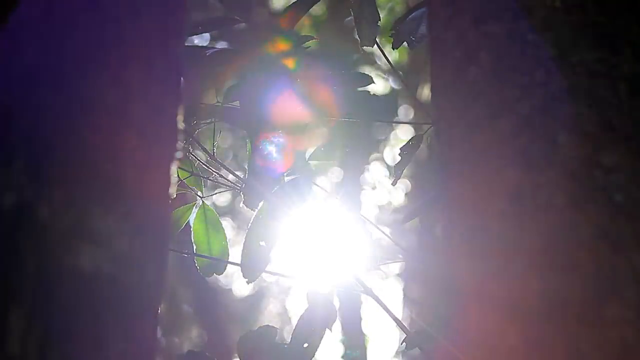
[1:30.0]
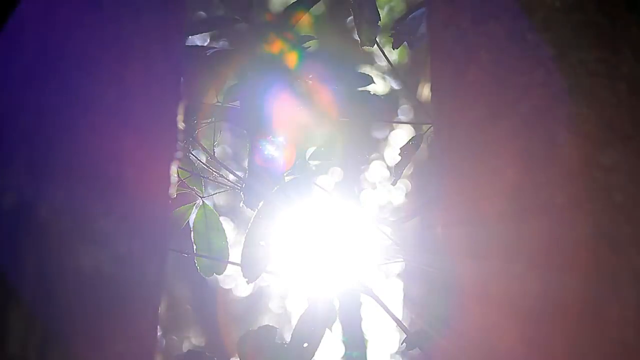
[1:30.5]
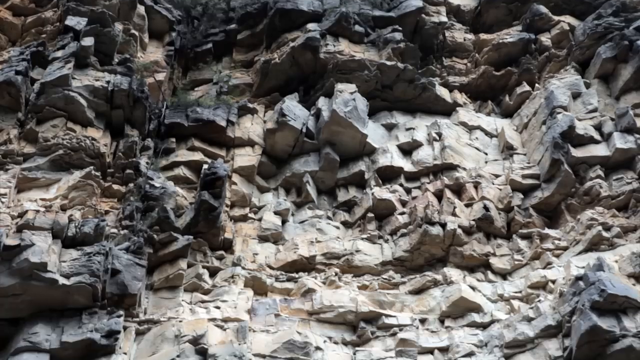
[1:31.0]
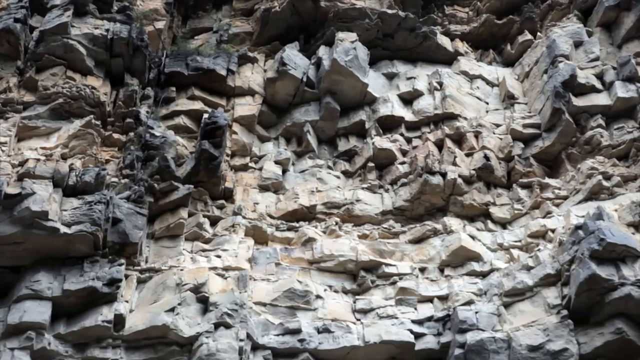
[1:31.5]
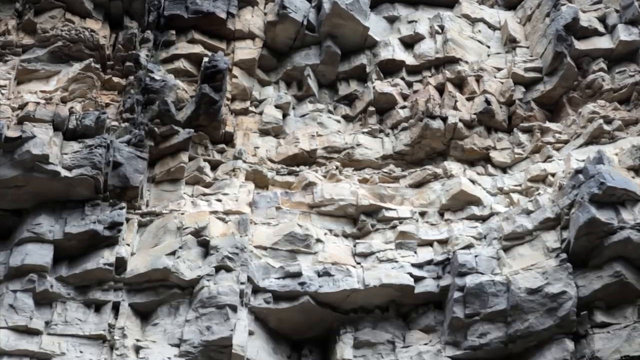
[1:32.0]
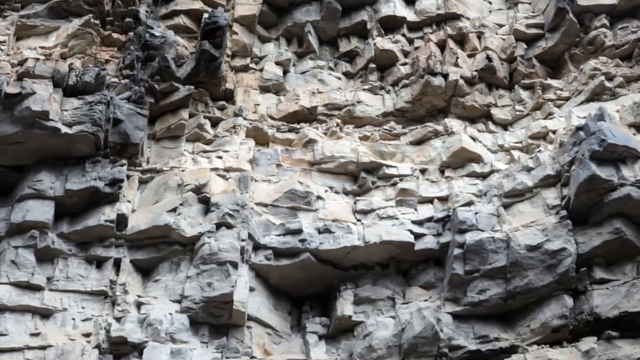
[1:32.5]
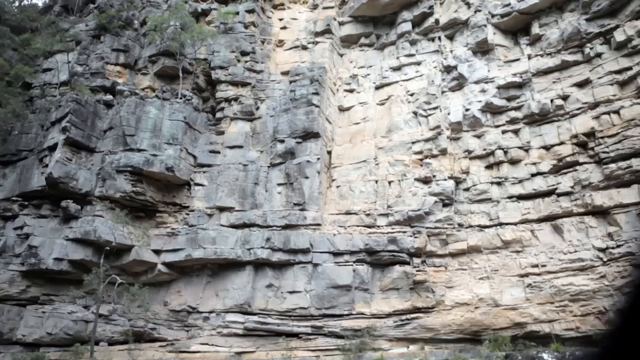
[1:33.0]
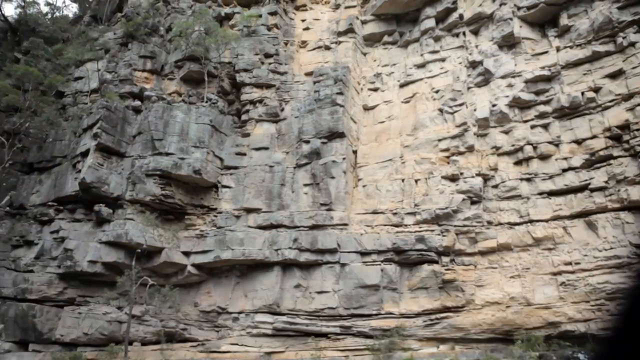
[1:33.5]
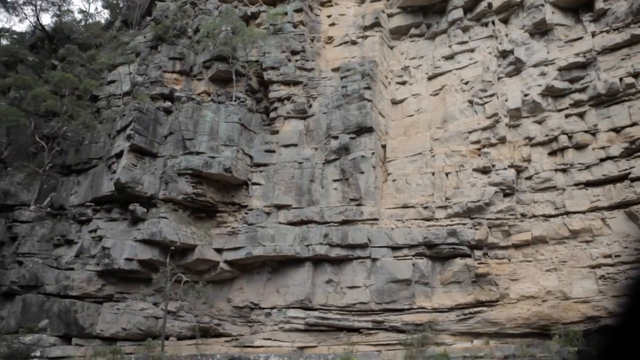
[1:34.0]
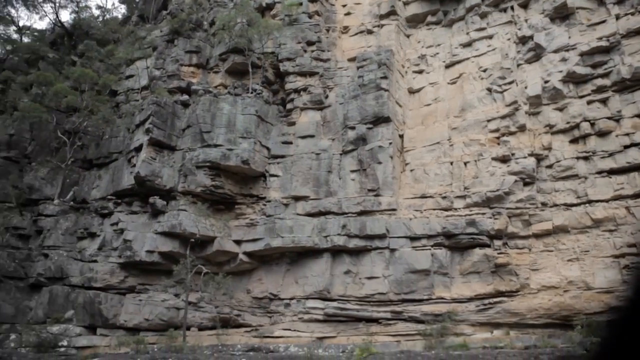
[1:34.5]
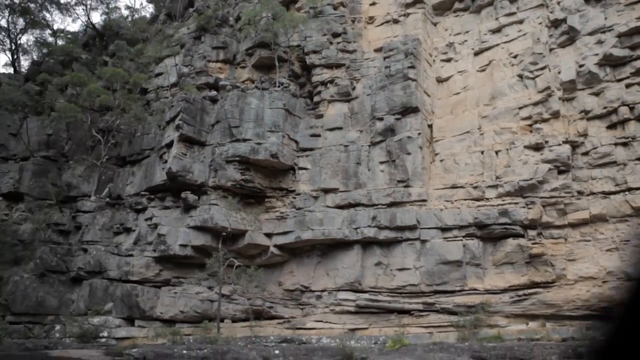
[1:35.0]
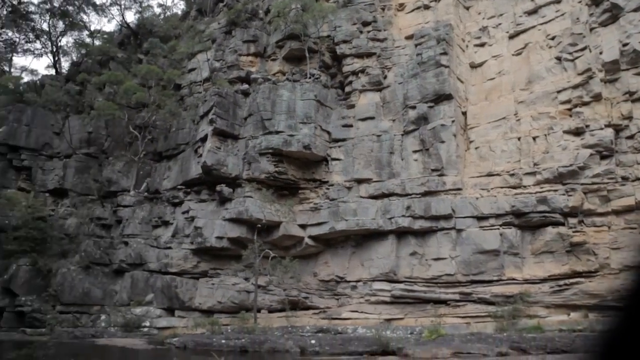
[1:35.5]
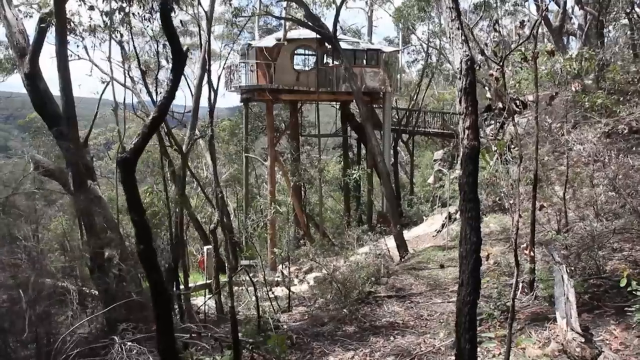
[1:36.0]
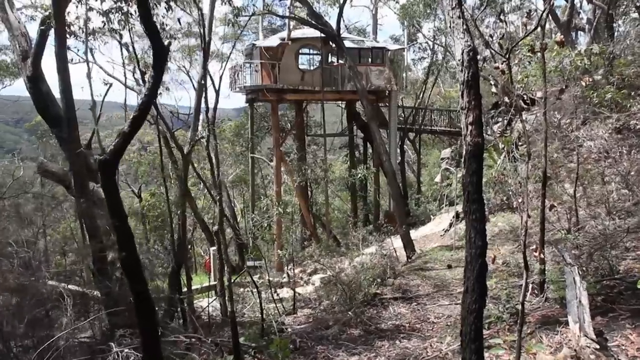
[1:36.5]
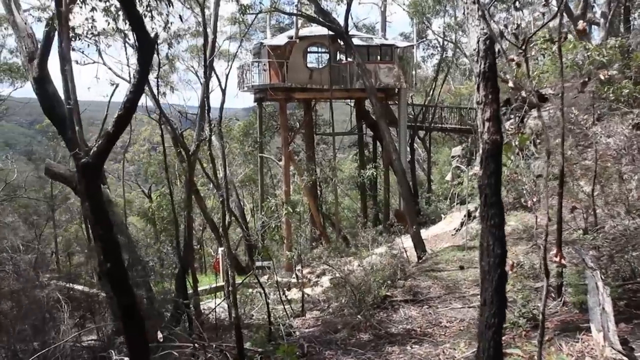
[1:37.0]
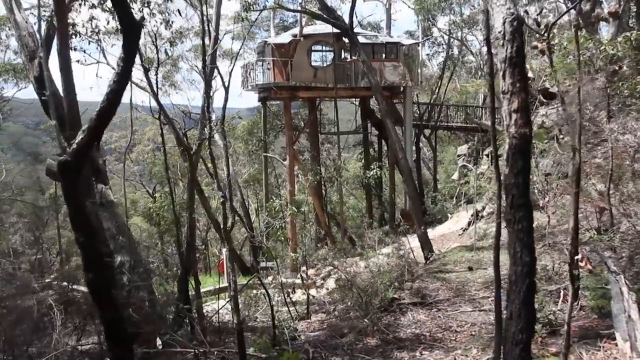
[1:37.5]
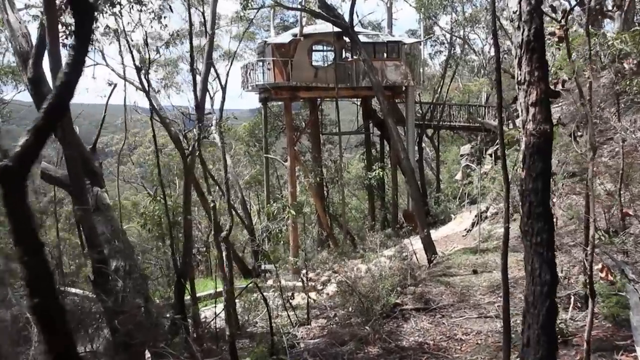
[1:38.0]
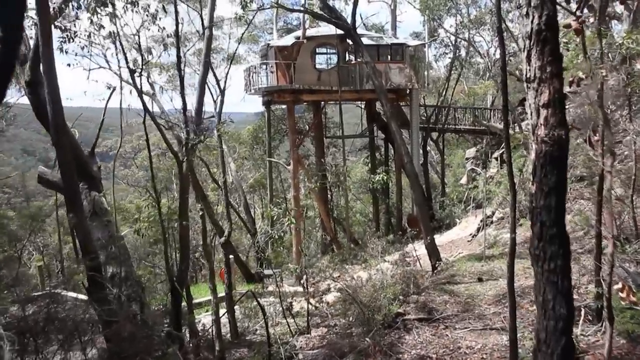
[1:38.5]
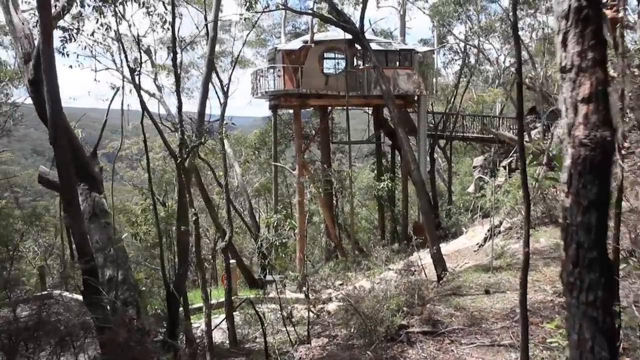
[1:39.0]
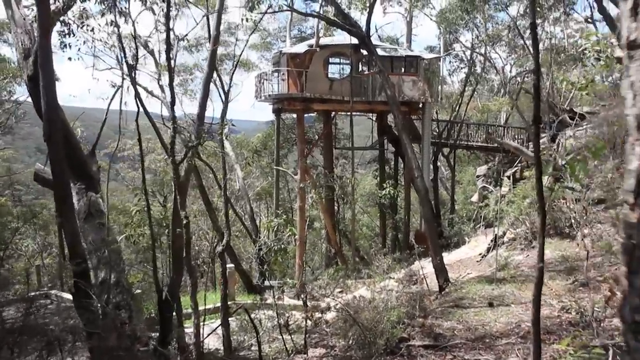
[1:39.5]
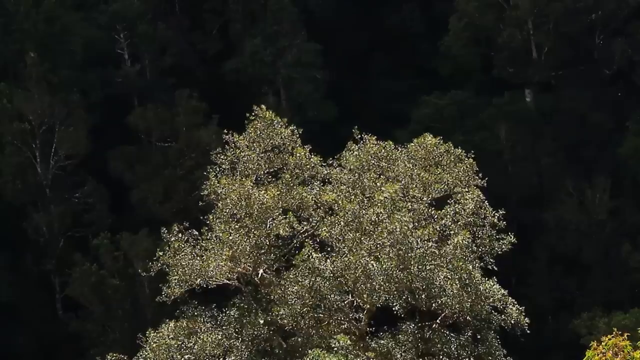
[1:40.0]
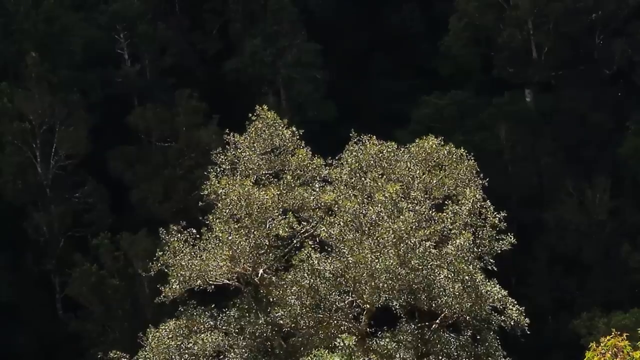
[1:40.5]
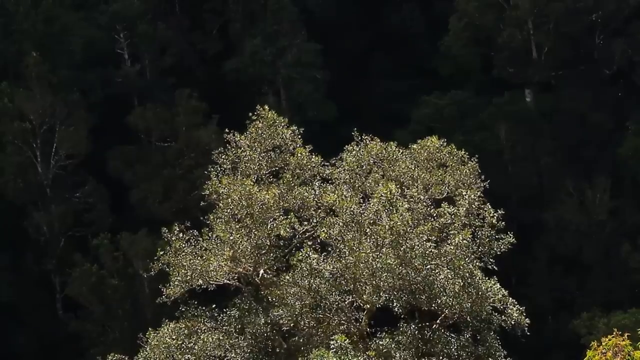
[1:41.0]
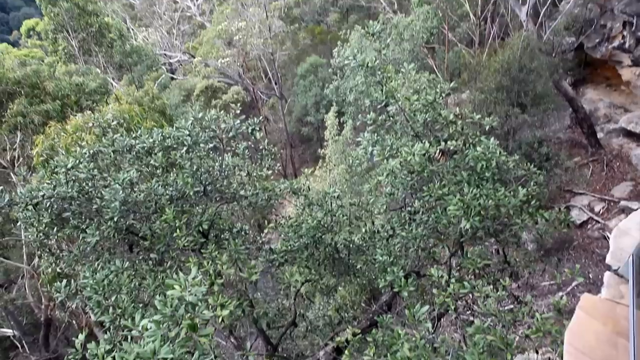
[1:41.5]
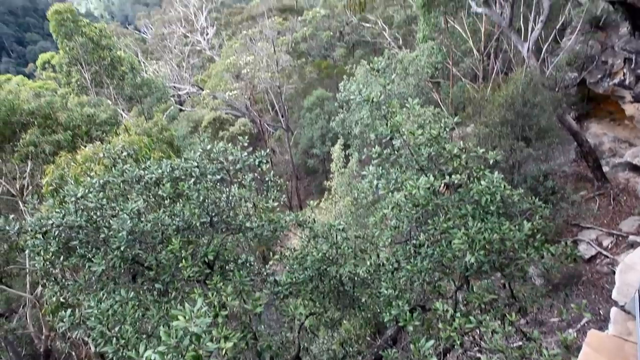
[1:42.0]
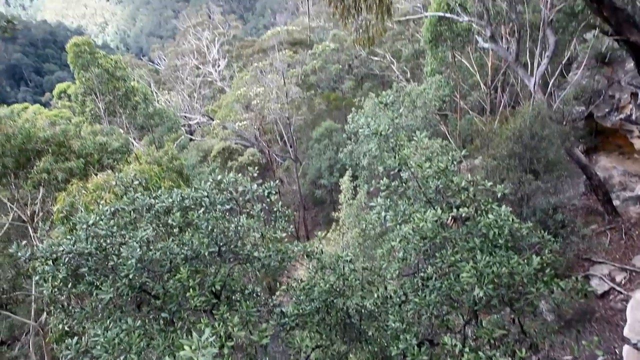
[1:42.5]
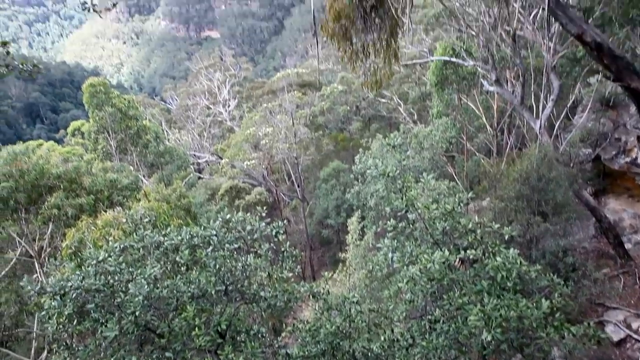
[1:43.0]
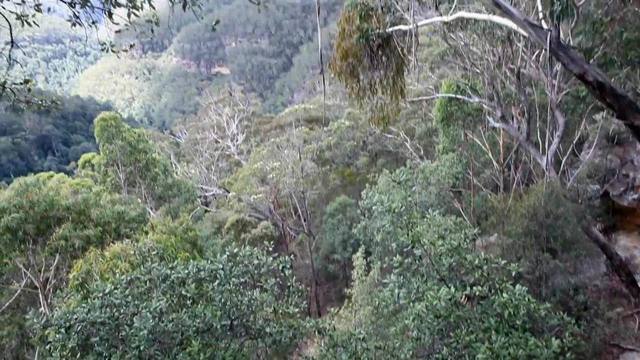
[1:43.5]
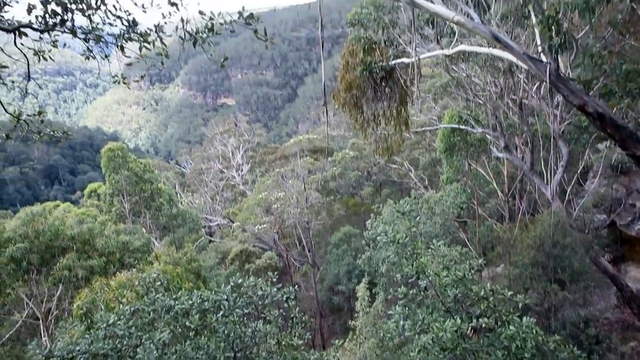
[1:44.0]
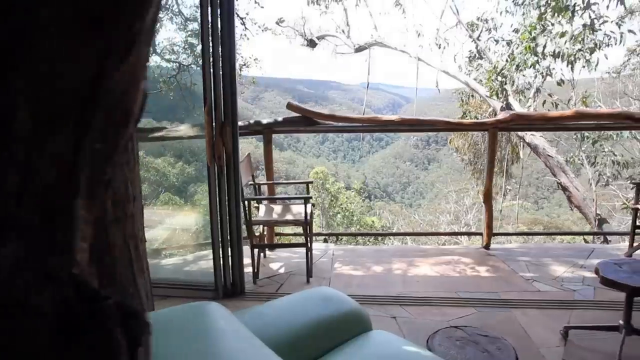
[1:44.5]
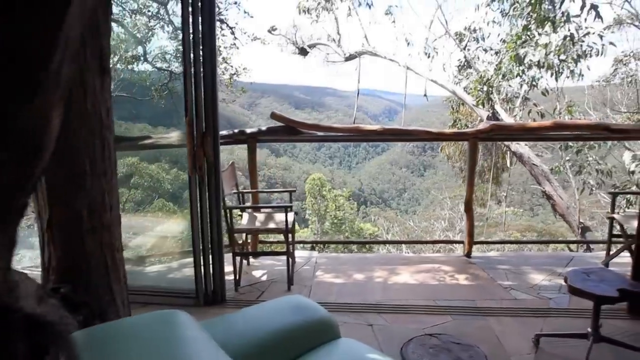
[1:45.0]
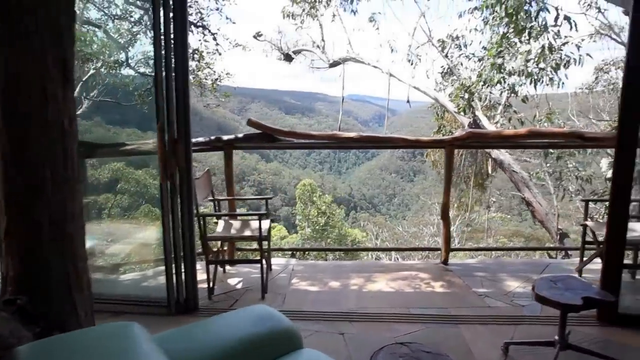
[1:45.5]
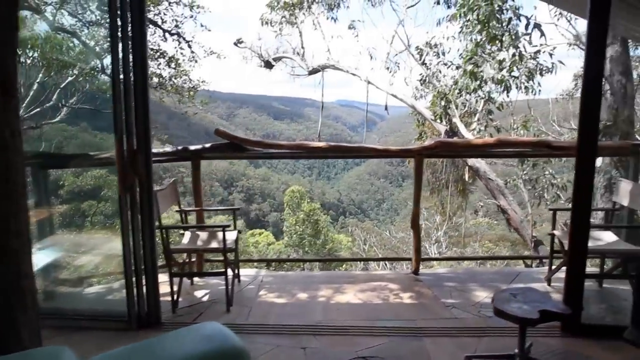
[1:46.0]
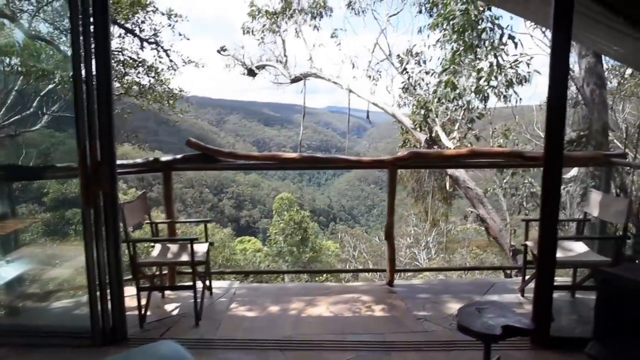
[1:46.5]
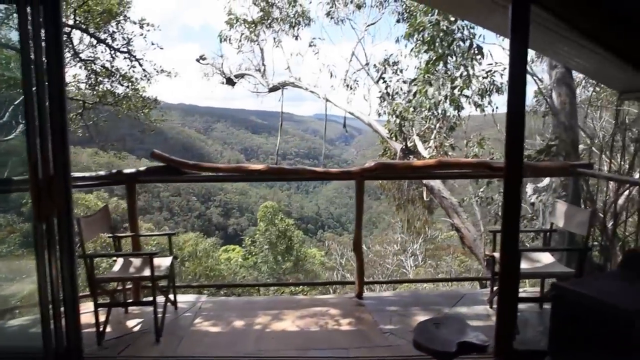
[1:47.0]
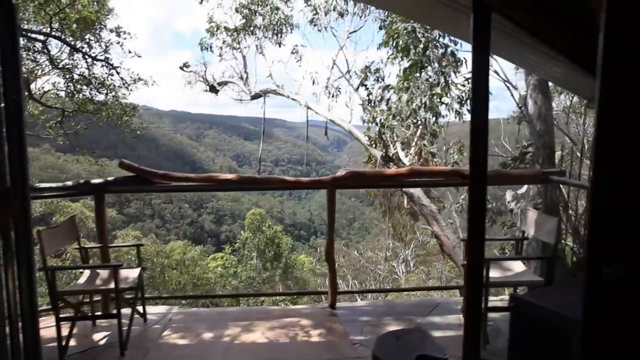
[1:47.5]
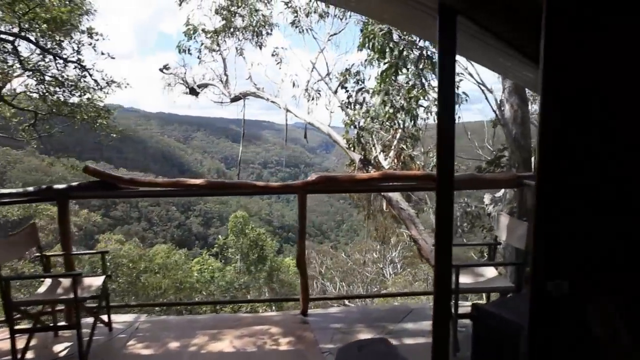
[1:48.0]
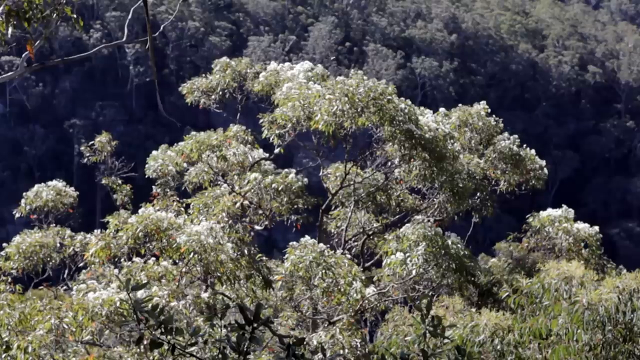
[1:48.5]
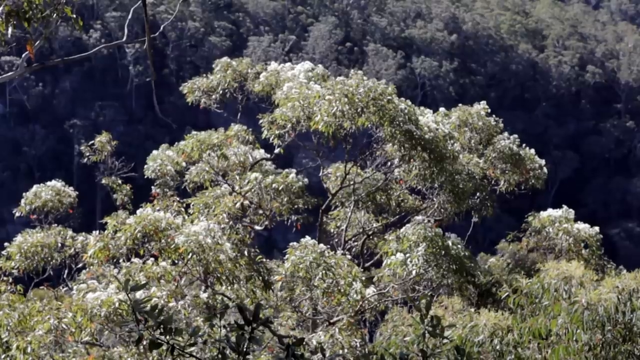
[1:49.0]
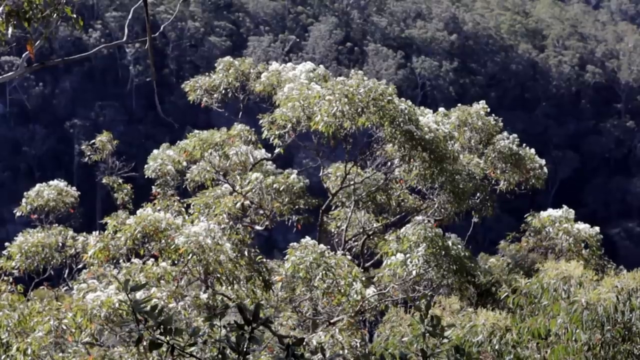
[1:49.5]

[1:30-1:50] A shot shows what looks like some rocks or leaves behind some sun, then a bunch of rocks. The camera pans from top to bottom over what looks like a cliffside above a great many rocks, followed by a panning shot of the same rocks from right to left, showing the large cliffside. The video cuts to exterior shots of the treehouse: its side, the beams sticking out of the ground holding it up, and the bridge toward the right side. The shots seem to creep in from behind tree branches or tree trunks. A tree rustles in the wind, and a shot pans from bottom to top over a bunch of treetops. The video then goes back inside the treehouse, looking outward at a balcony and the view of the greenery of the mountains.